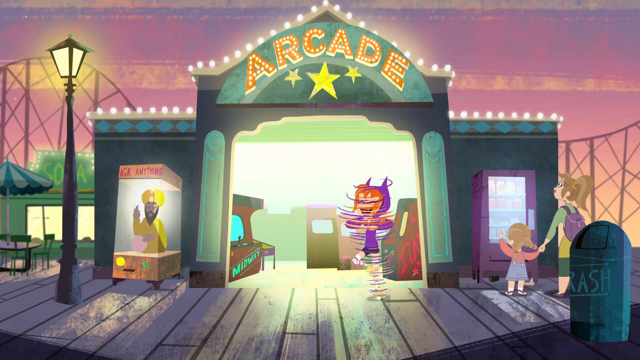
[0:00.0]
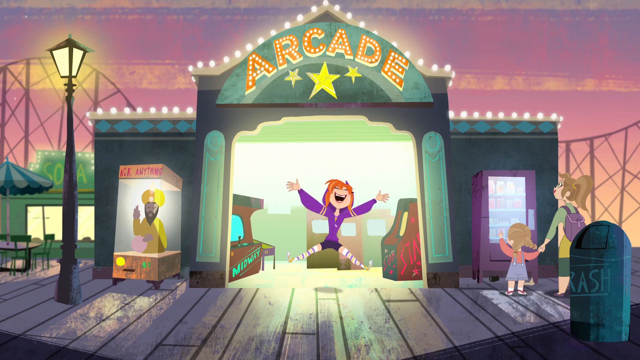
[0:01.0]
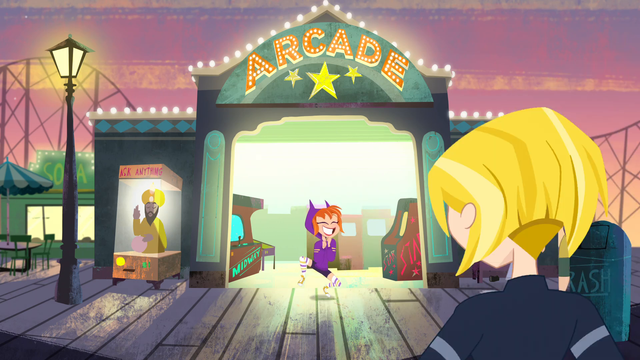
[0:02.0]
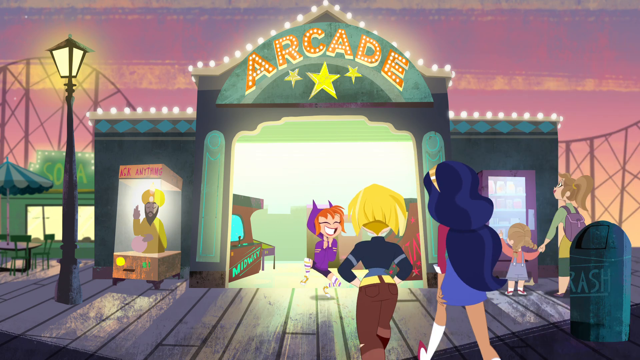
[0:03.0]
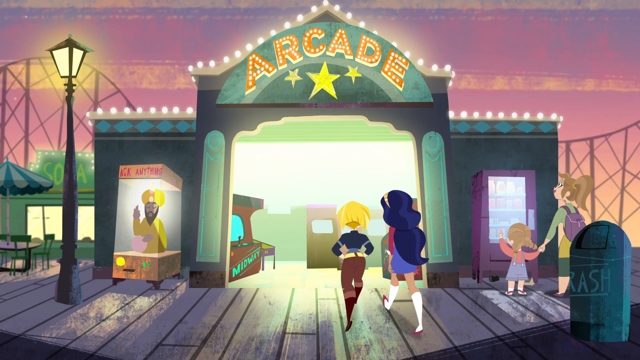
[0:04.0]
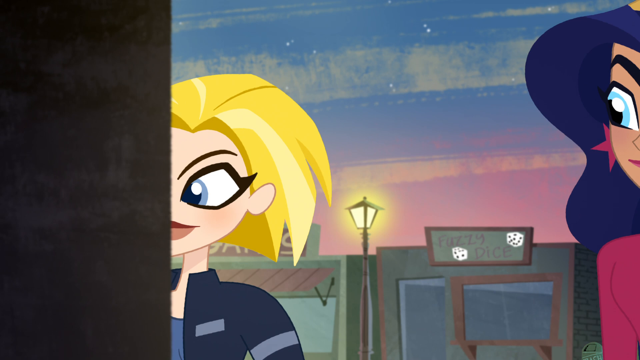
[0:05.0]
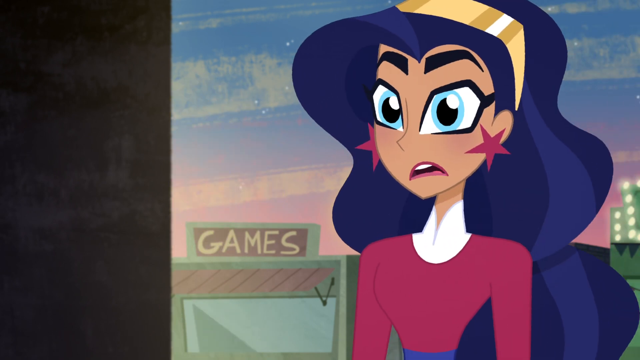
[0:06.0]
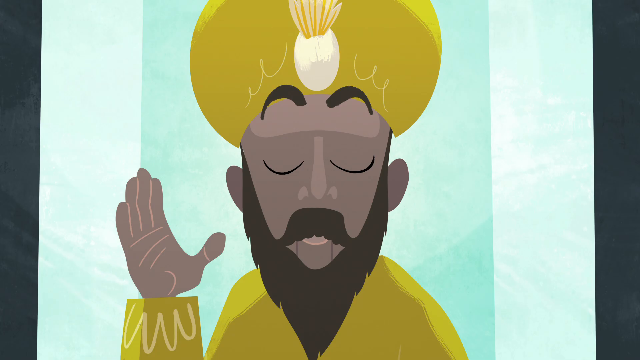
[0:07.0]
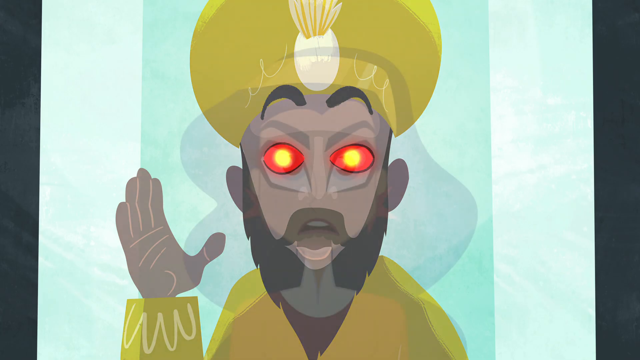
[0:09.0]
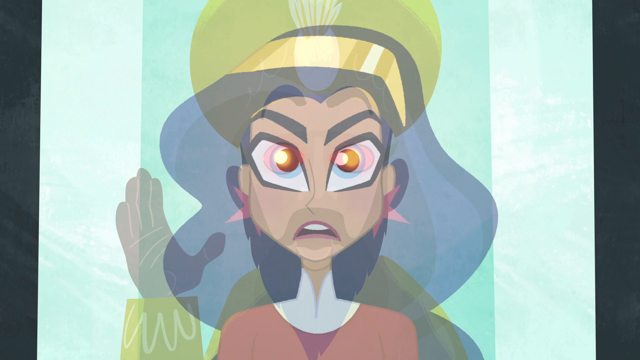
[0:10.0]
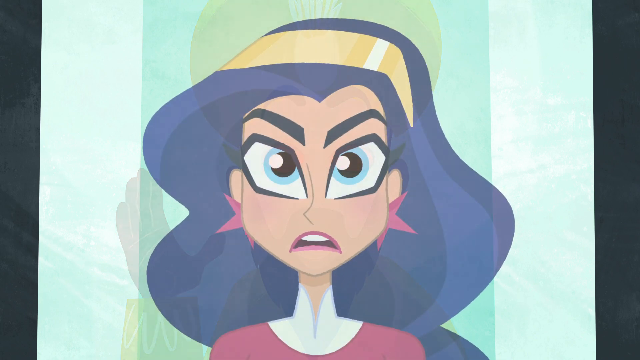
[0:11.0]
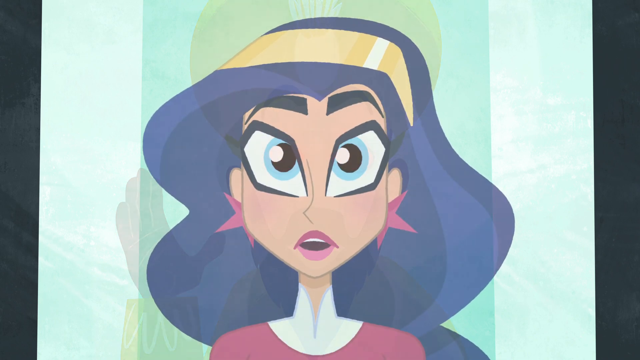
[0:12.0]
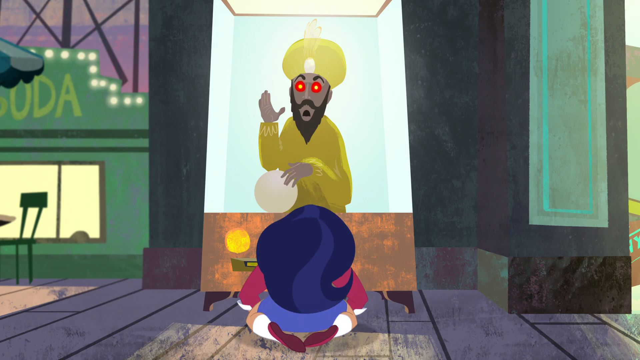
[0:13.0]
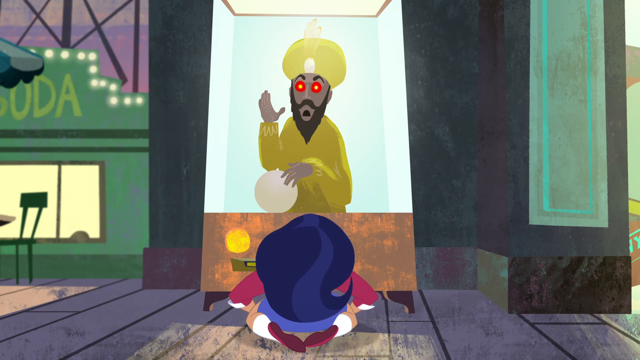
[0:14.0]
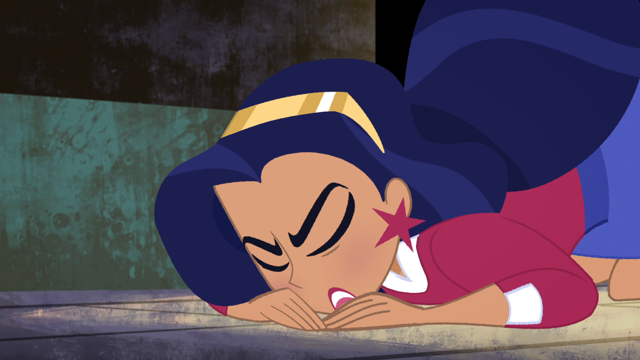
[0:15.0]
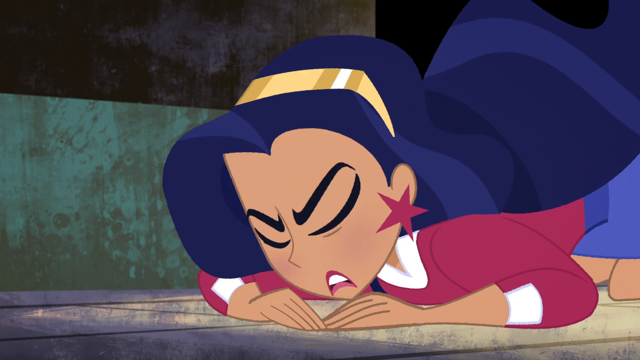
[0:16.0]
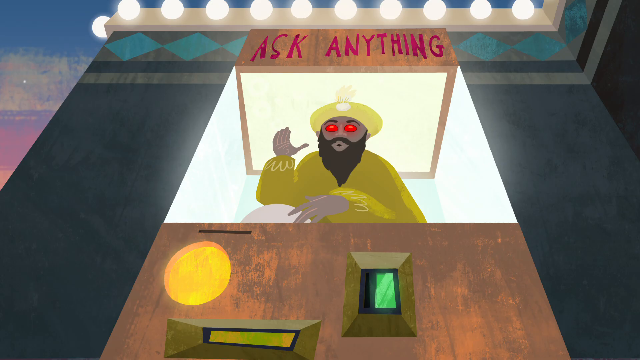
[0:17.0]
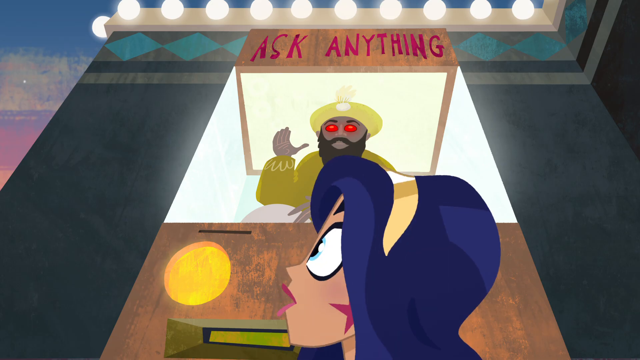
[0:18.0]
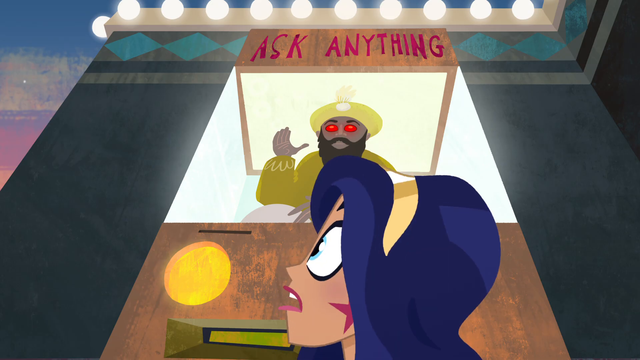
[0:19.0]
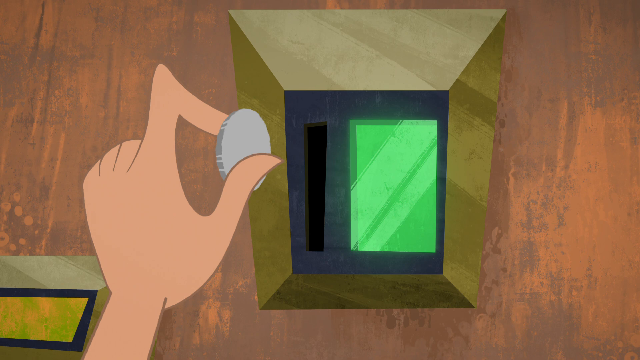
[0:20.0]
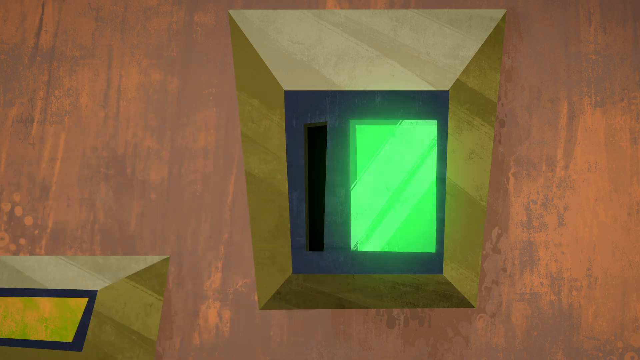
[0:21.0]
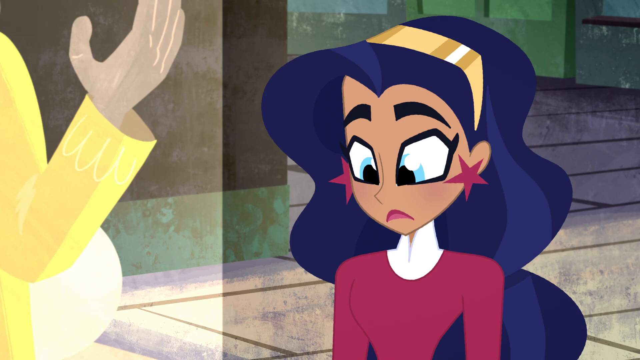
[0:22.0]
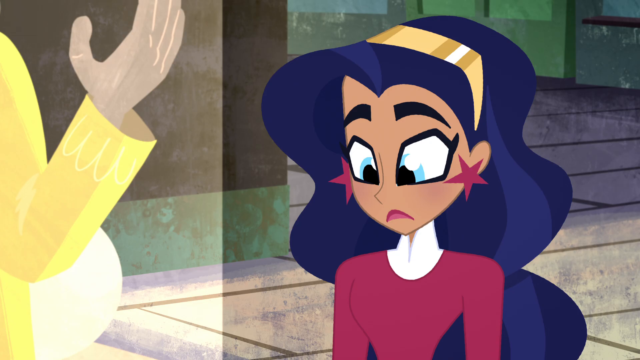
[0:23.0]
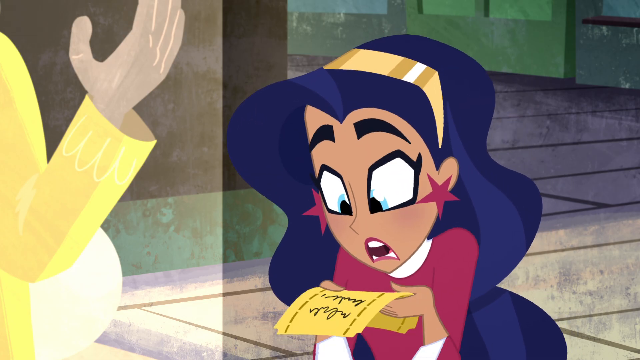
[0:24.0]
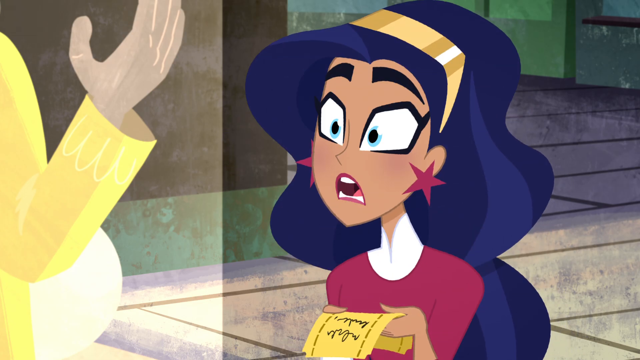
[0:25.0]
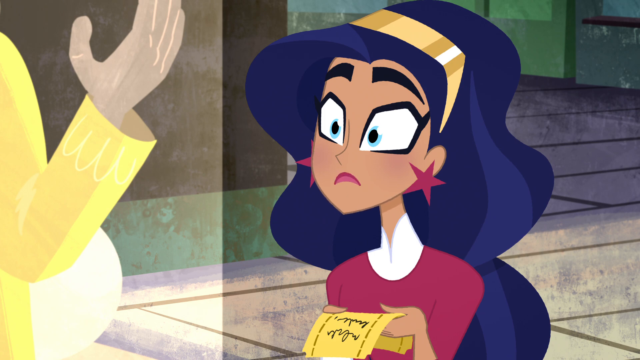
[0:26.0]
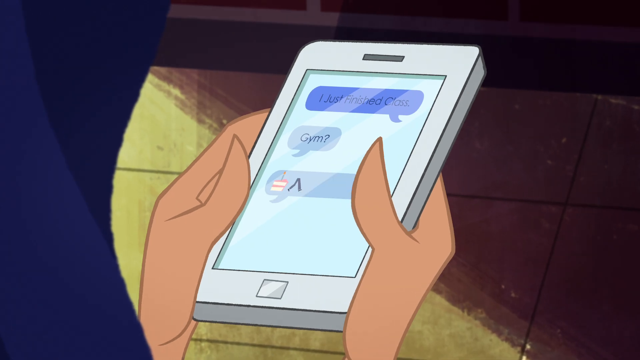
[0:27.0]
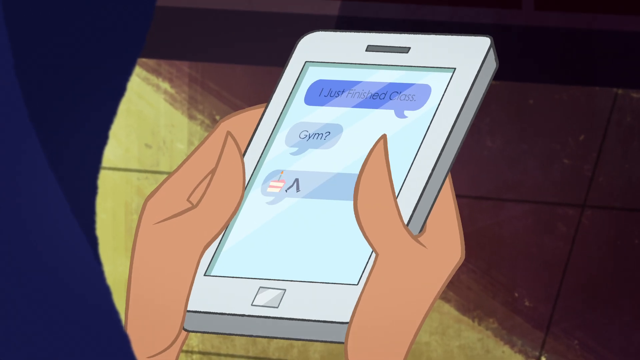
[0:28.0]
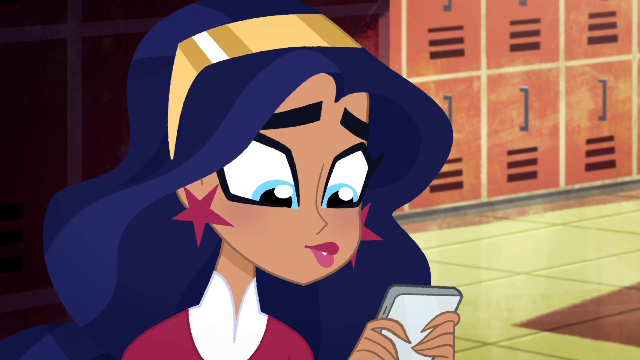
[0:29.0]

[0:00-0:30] An illustrated video resembling a cartoon plays out. The main character appears to wear a purple hoodie and has red hair. Other characters enter the scene, walking into a building with the name "Arcade" above it. A Zoltan-style fortune-telling machine stands just outside the arcade, a game with a wizard inside who looks like he is going to tell people's futures; above it are the words "Ask anything." A character with blue hair goes up to the machine, puts a coin into the slot, and gets her question answered on a piece of paper that comes out of the machine. Next, she looks at her cell phone screen and says something.